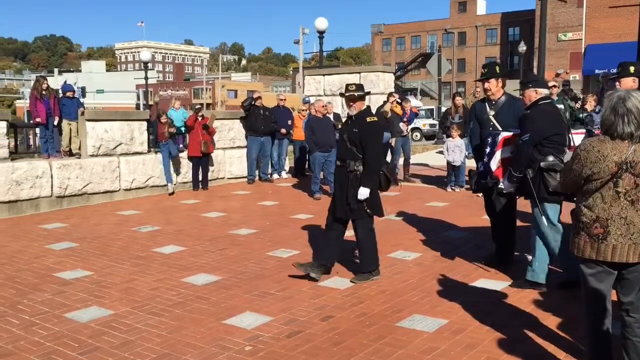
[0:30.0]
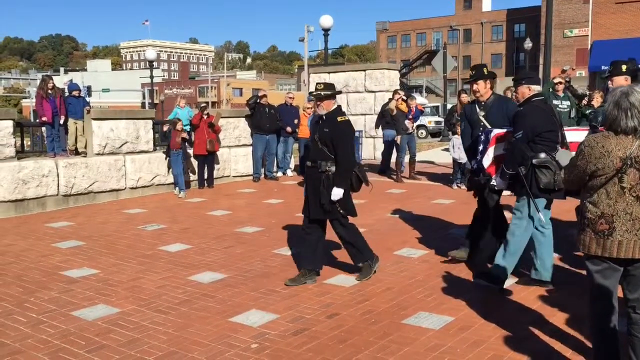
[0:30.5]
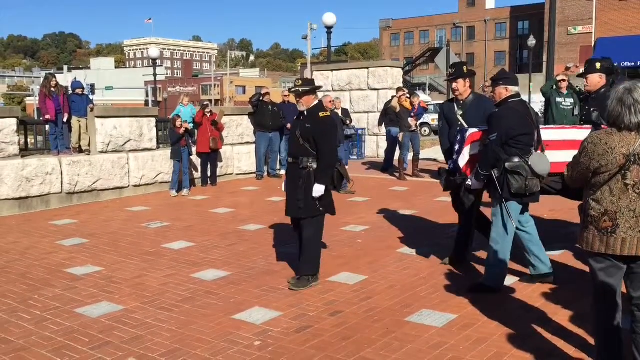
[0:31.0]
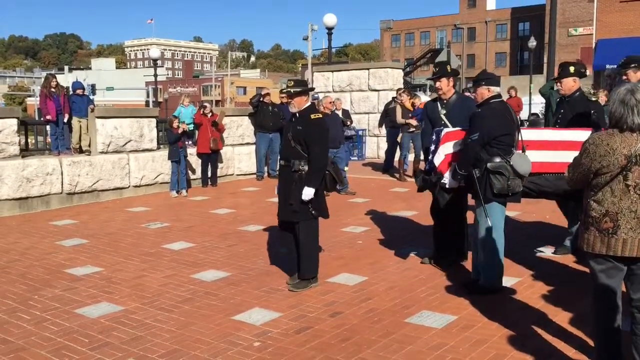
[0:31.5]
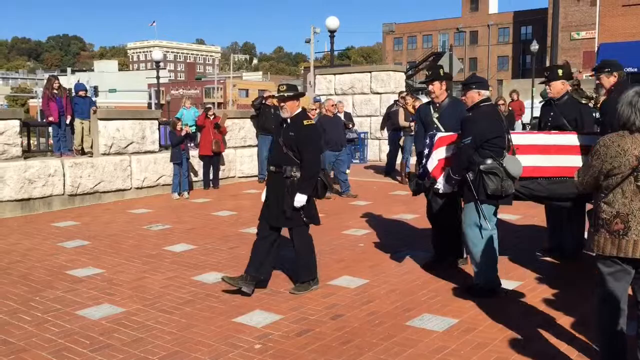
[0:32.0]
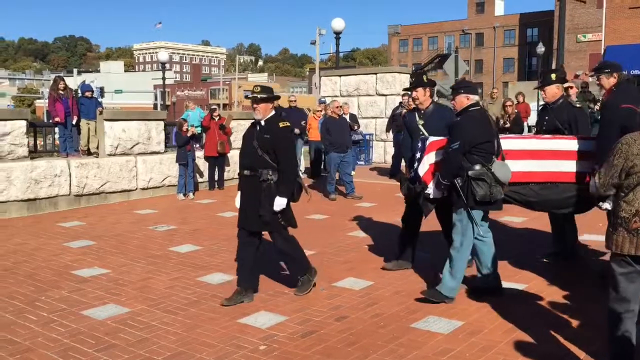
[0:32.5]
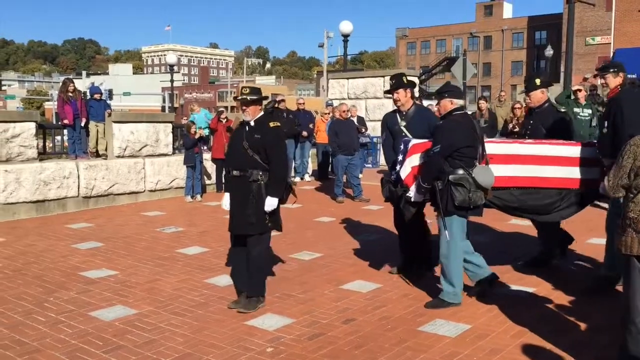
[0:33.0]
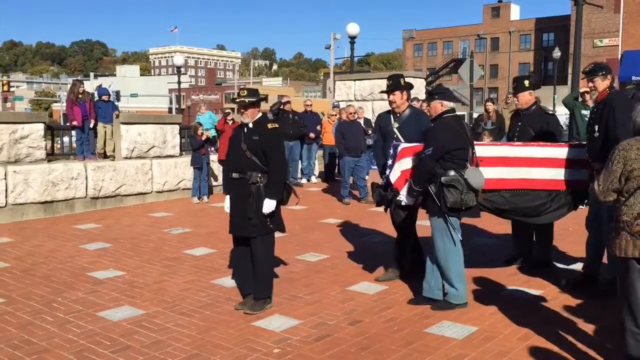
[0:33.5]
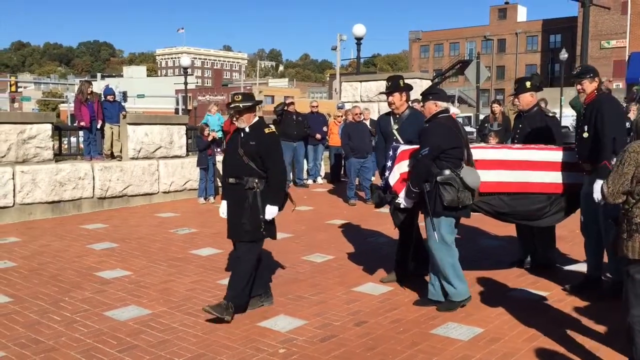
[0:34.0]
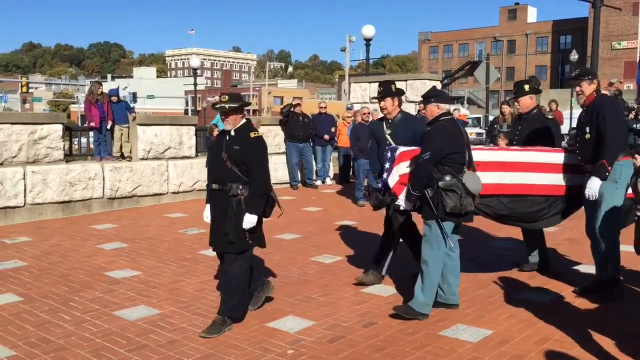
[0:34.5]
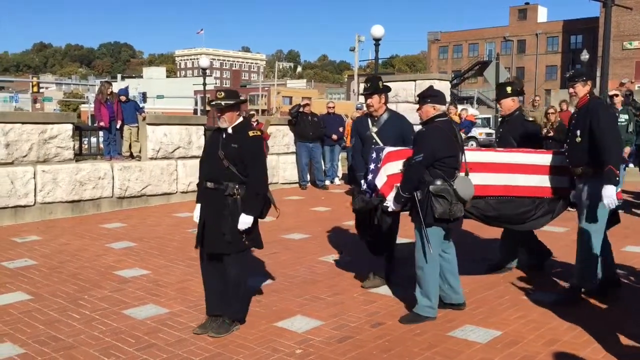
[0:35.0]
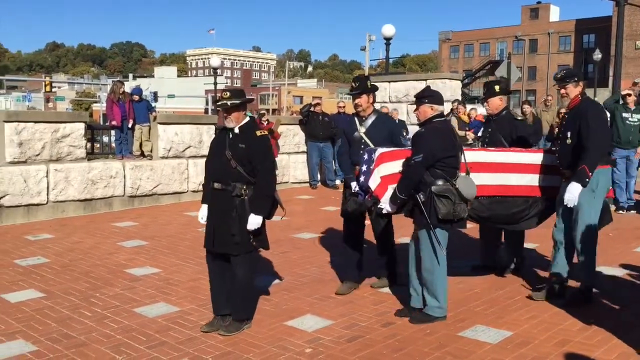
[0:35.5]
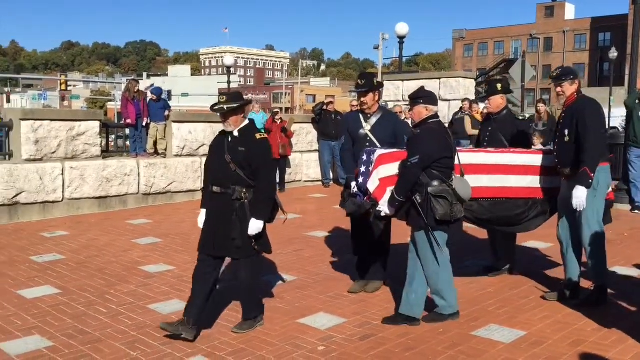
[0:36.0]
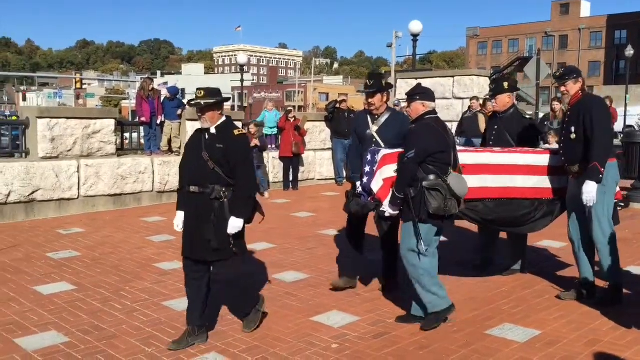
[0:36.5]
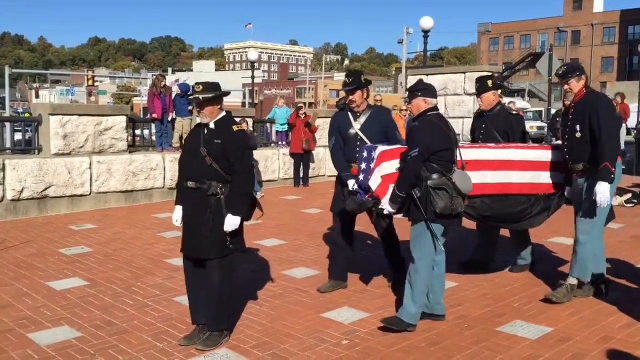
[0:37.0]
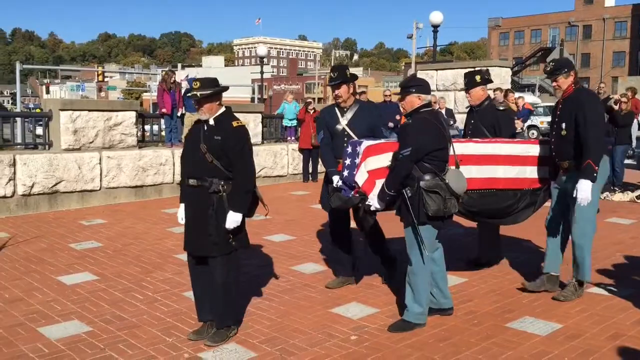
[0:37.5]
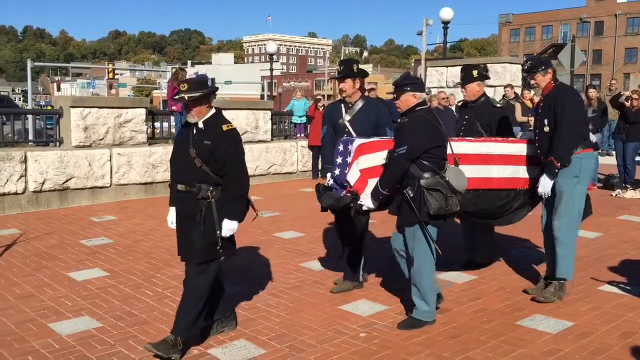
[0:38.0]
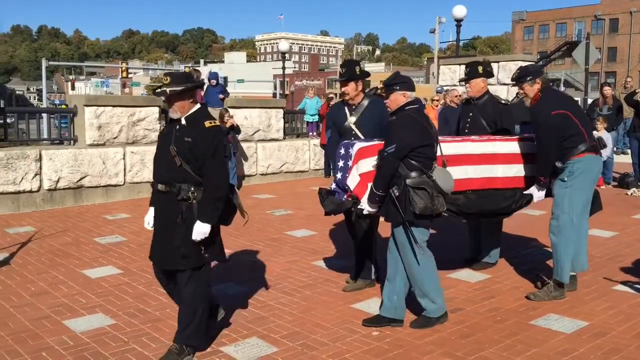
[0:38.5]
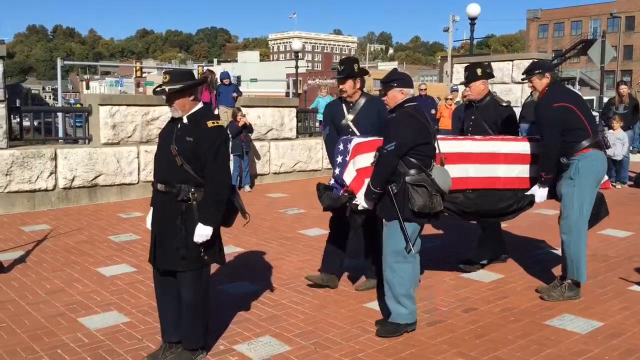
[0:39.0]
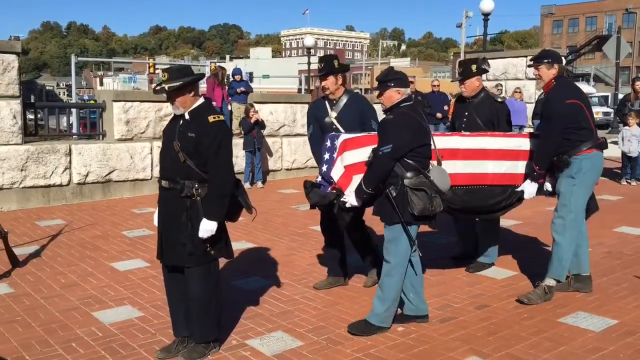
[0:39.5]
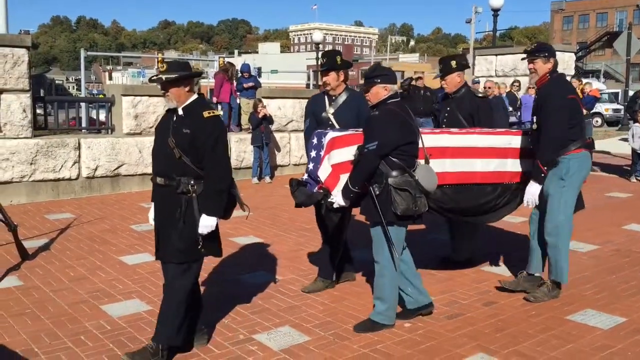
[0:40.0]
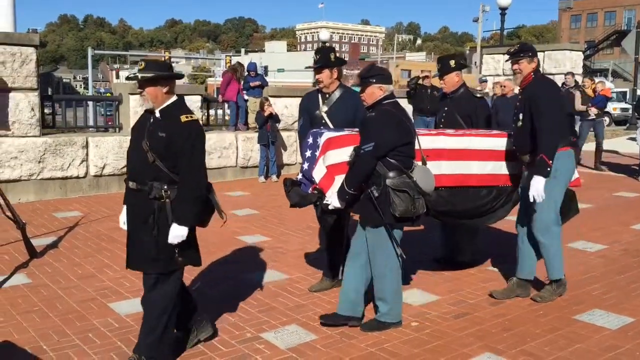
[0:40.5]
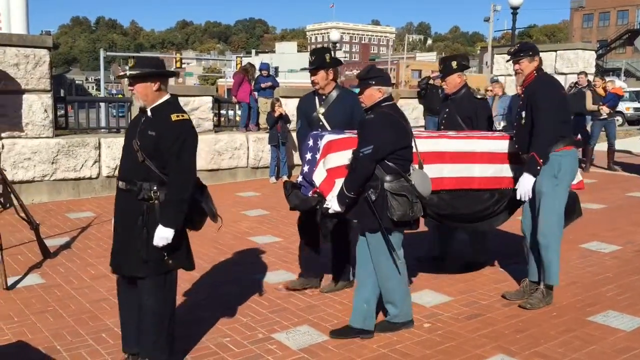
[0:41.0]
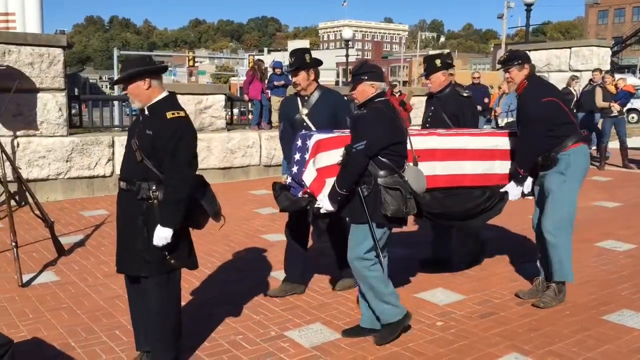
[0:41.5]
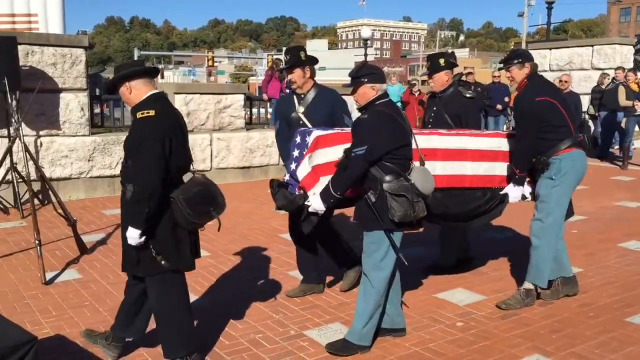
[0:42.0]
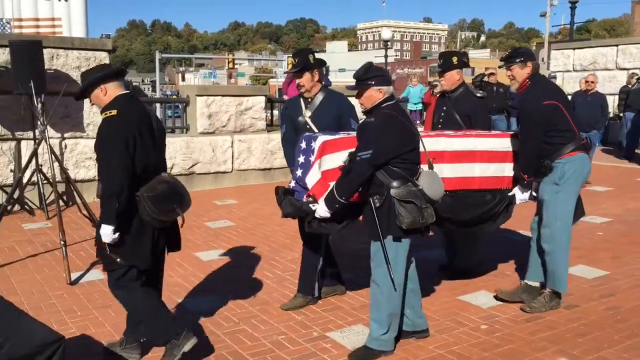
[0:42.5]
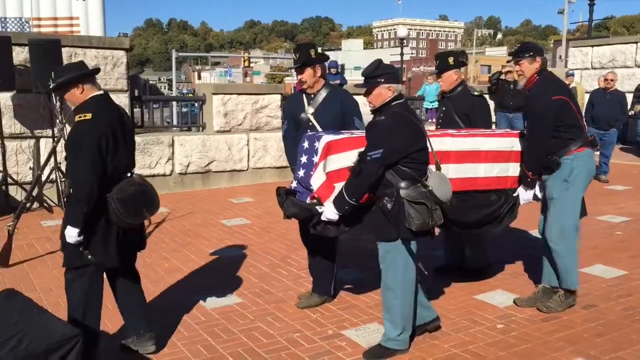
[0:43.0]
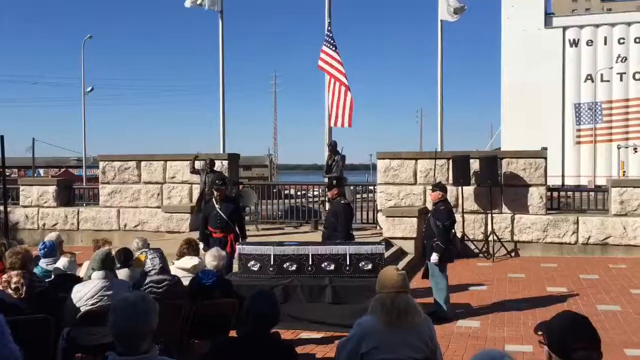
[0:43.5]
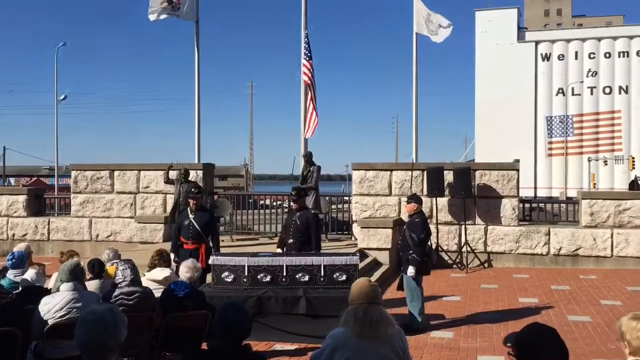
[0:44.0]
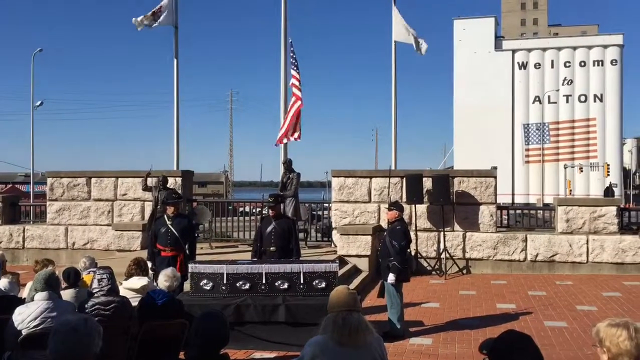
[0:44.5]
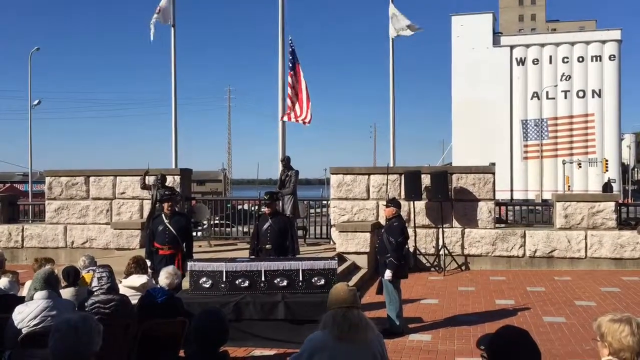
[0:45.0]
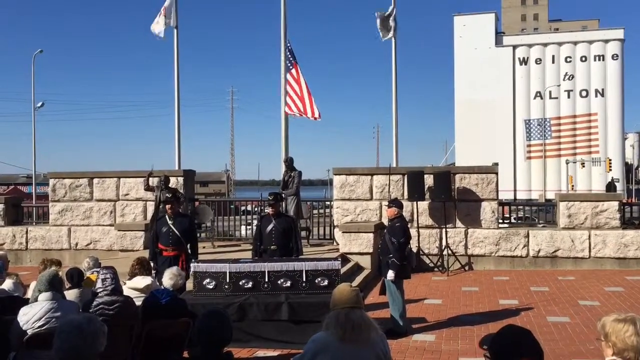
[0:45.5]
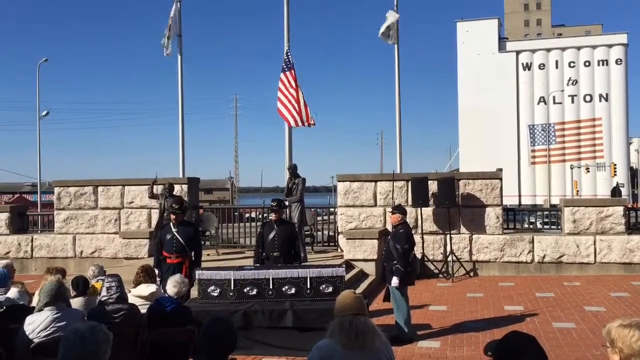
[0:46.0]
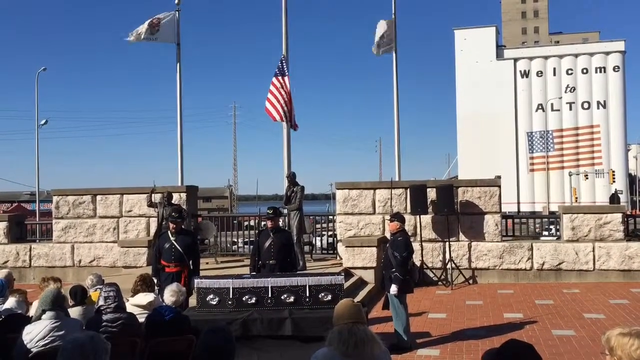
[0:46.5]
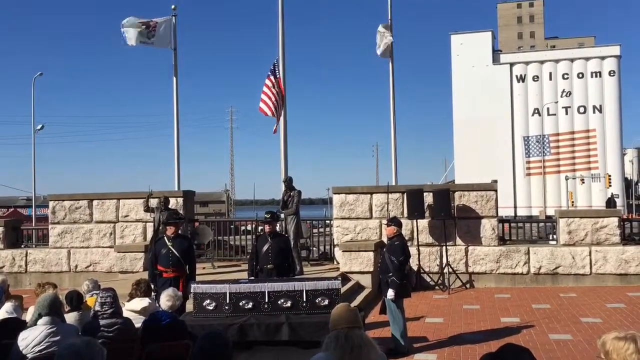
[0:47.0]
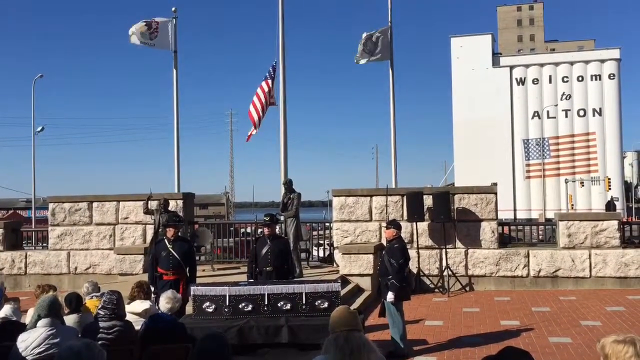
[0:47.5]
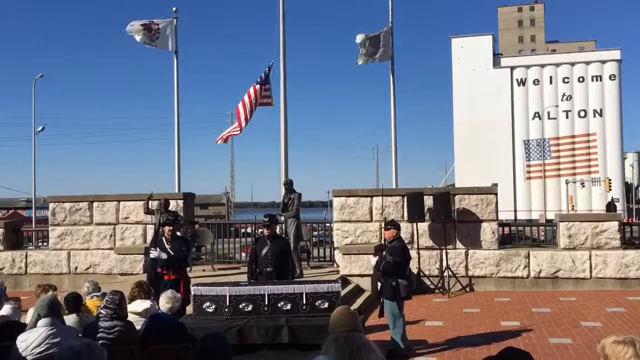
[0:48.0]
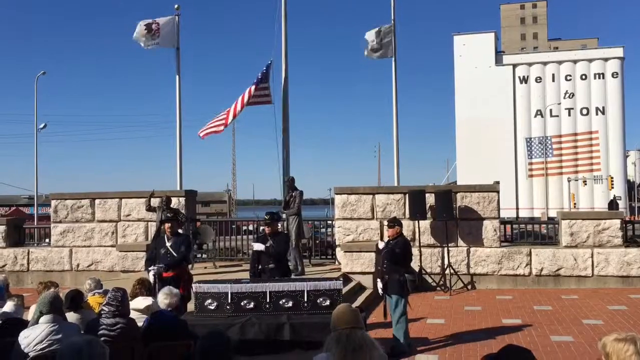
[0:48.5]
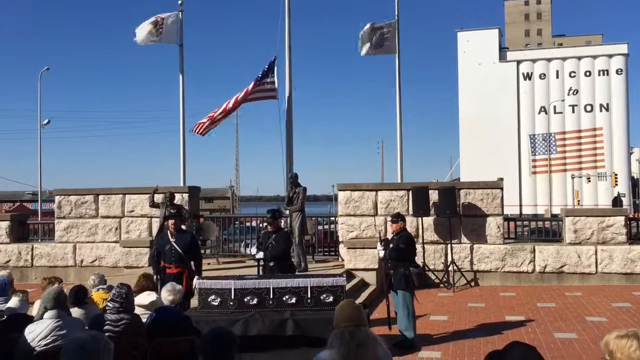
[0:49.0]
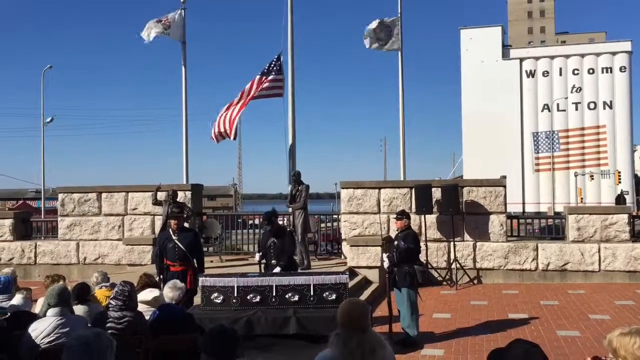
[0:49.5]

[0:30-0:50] People are gathered outdoors in what looks like an outdoor plaza. A group of men wearing what look like American Civil War Union uniforms carries a coffin with an American flag draped over it; four men hold the coffin while another man walks in front of them. They walk across a red brick paved courtyard. The scene switches to a longer view of the courtyard, with the men standing around what looks like the coffin, now without a flag over it. Behind them are two statues, one of a man with his right hand raised and another of a man resting his head on his hand and looking down. Behind the statues are three flagpoles; two of the flags are white, and the American flag flies from the center flagpole. On the right of the screen, in the background, is what looks like a large building with a white side, on which an American flag is painted with the words "Welcome to Alton" above it.